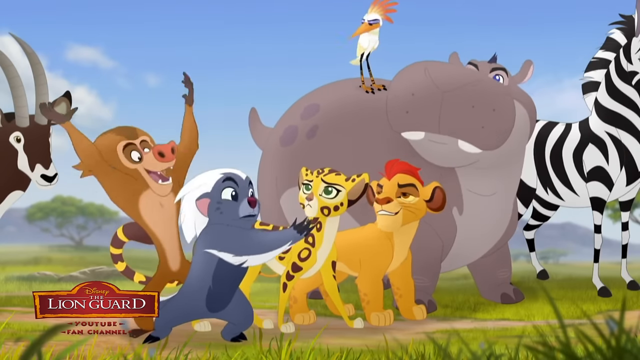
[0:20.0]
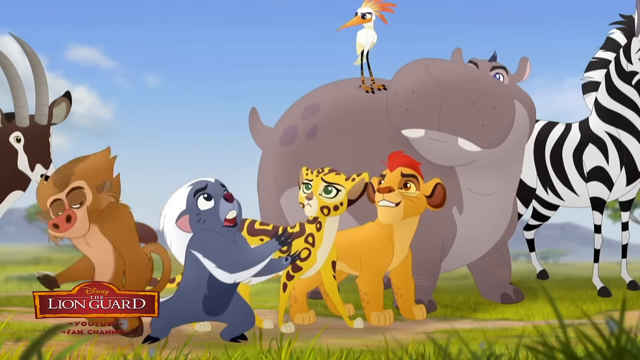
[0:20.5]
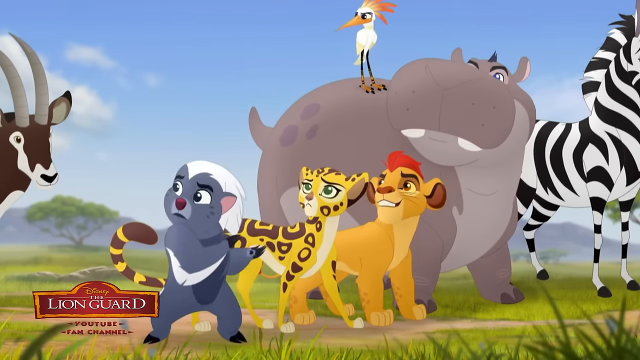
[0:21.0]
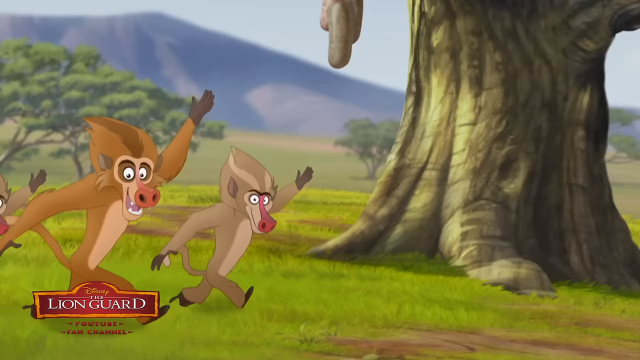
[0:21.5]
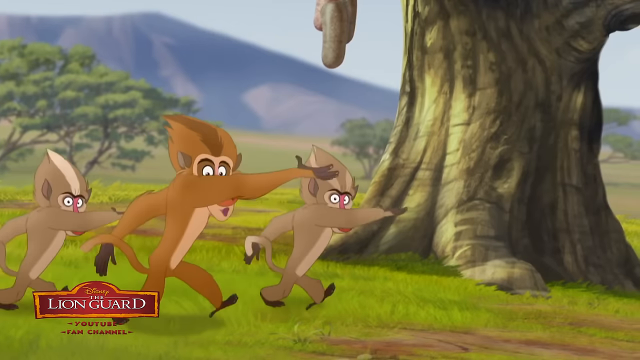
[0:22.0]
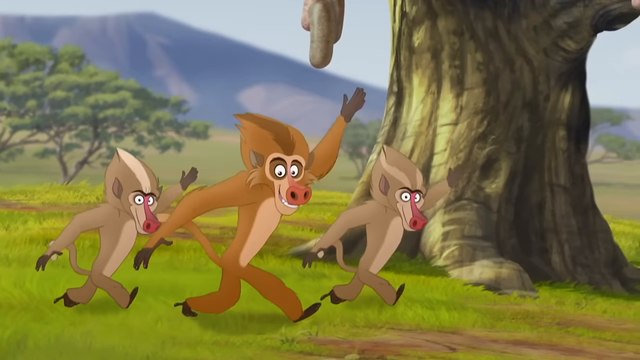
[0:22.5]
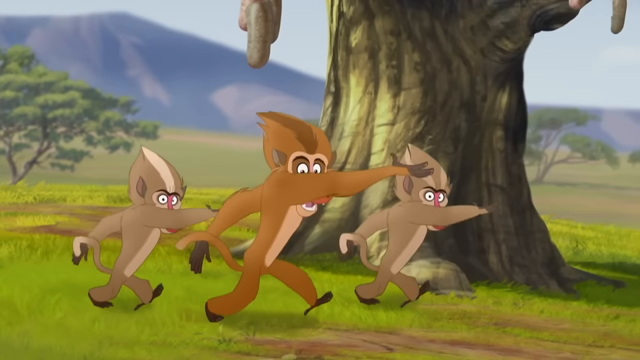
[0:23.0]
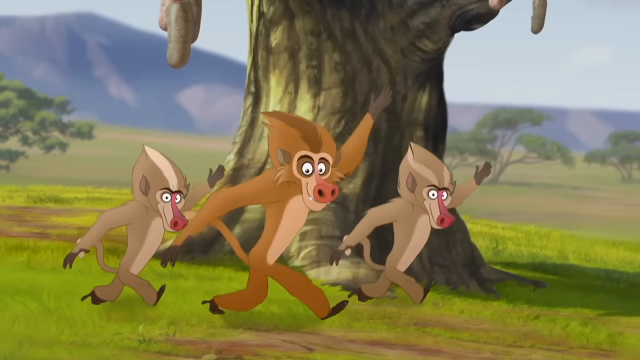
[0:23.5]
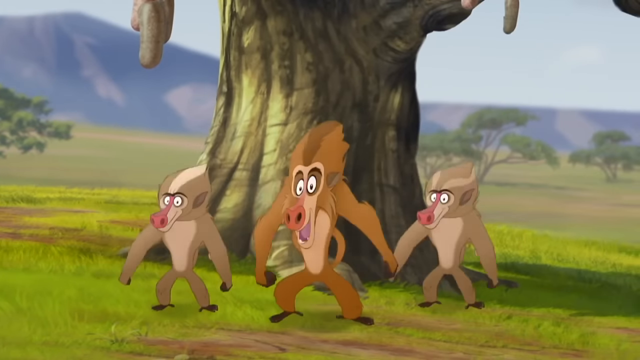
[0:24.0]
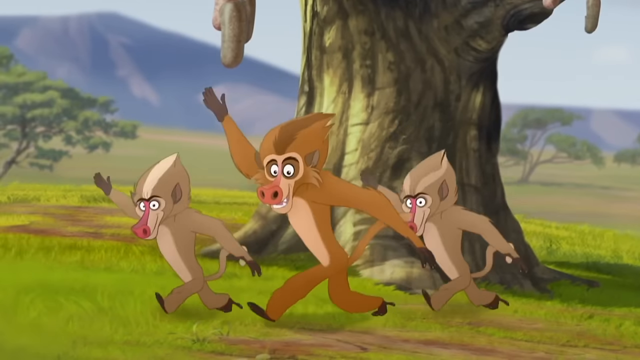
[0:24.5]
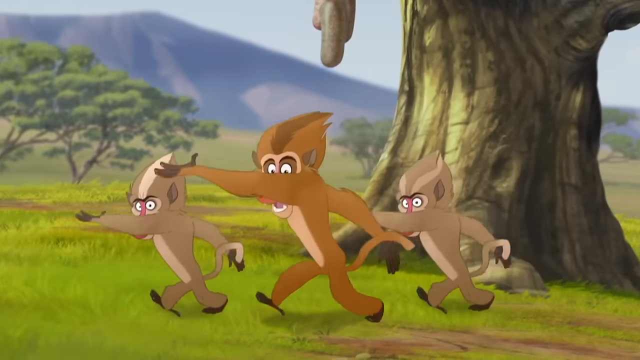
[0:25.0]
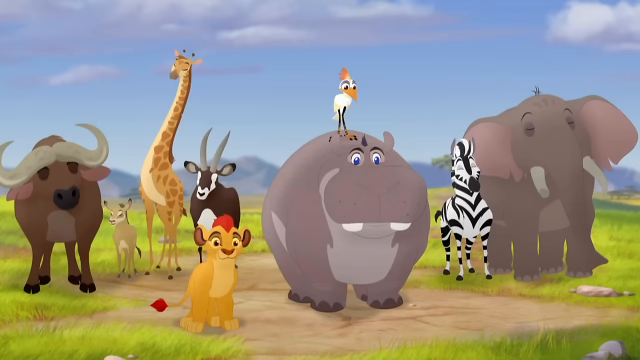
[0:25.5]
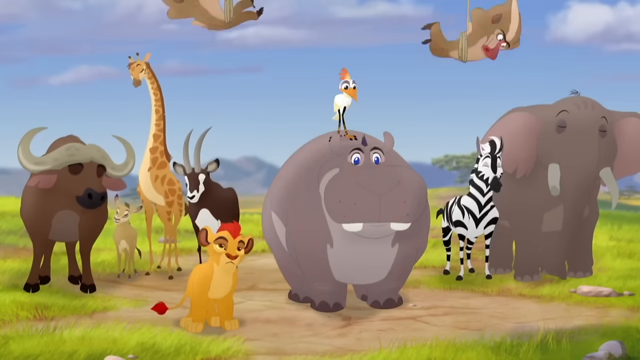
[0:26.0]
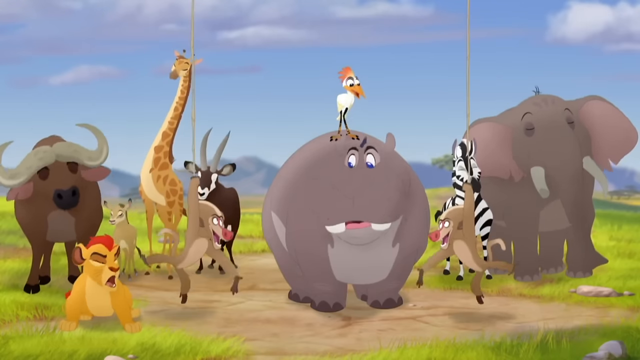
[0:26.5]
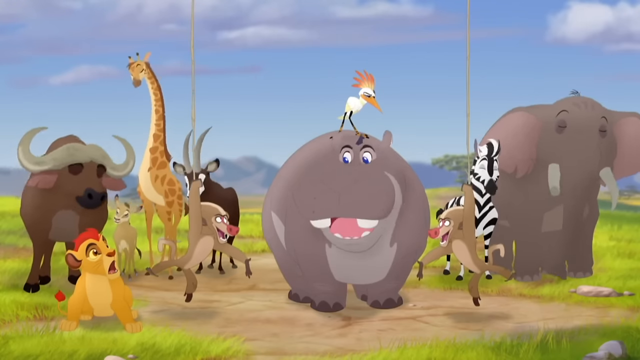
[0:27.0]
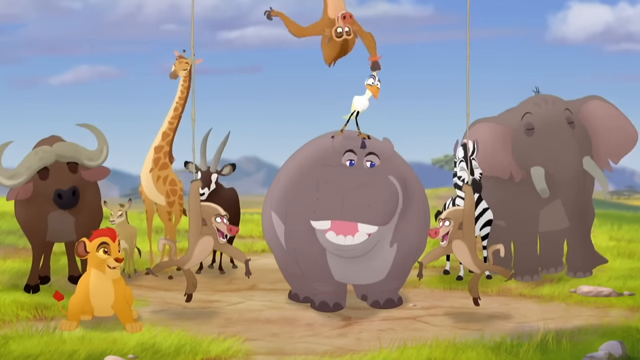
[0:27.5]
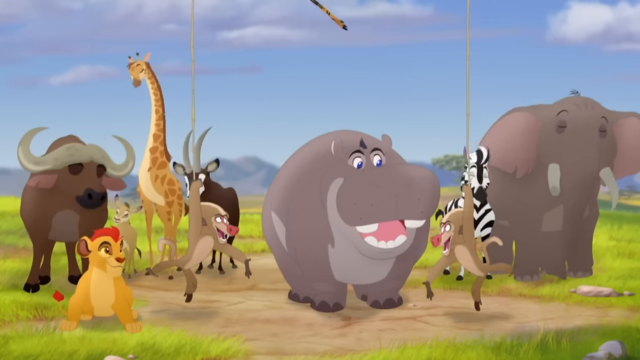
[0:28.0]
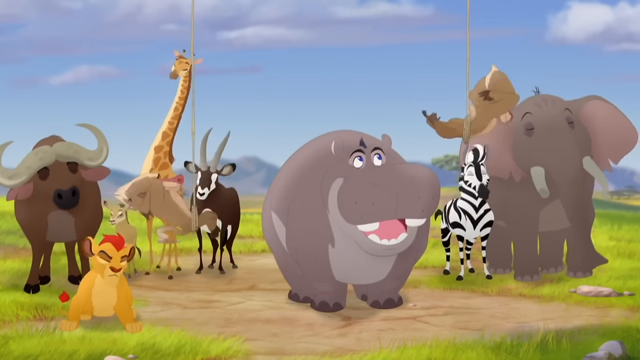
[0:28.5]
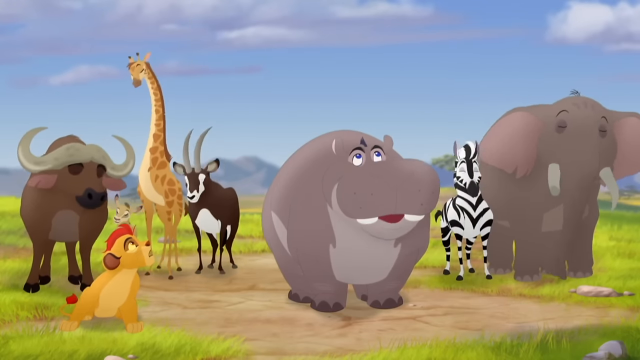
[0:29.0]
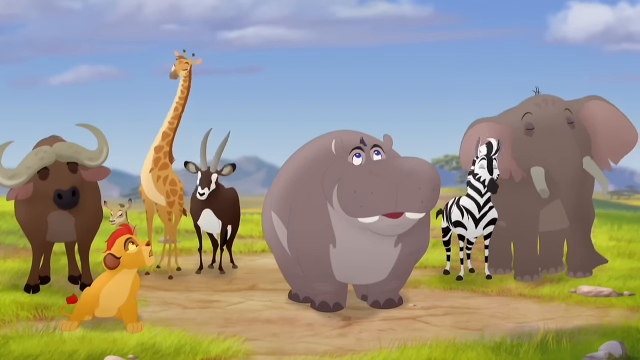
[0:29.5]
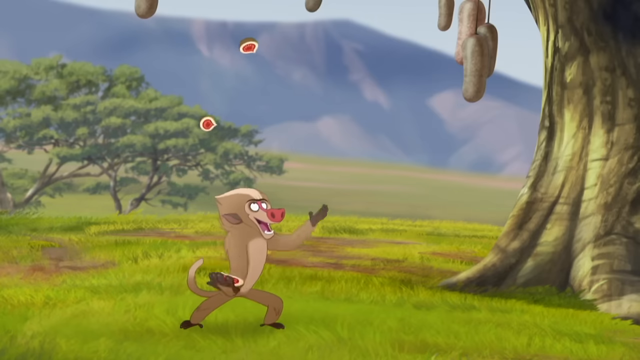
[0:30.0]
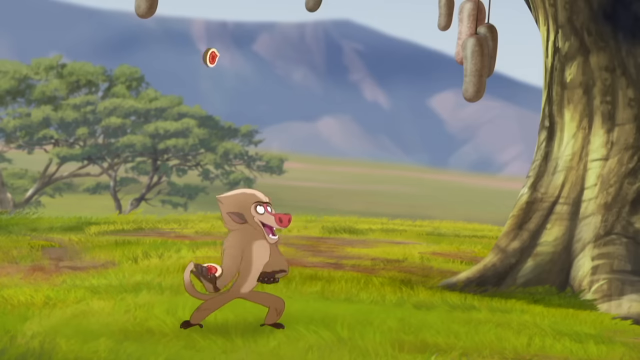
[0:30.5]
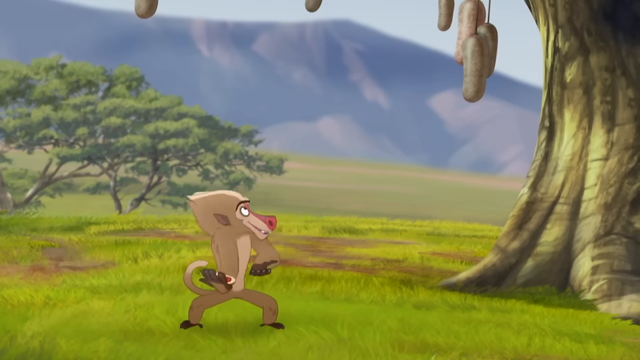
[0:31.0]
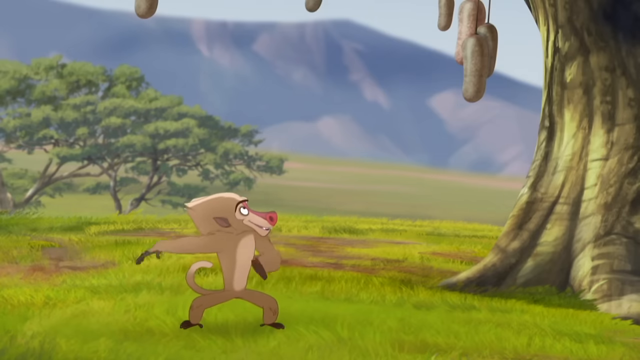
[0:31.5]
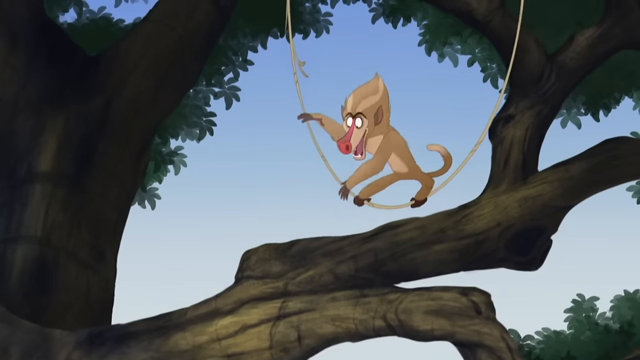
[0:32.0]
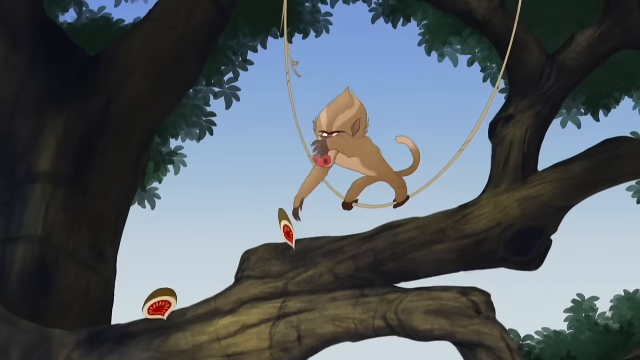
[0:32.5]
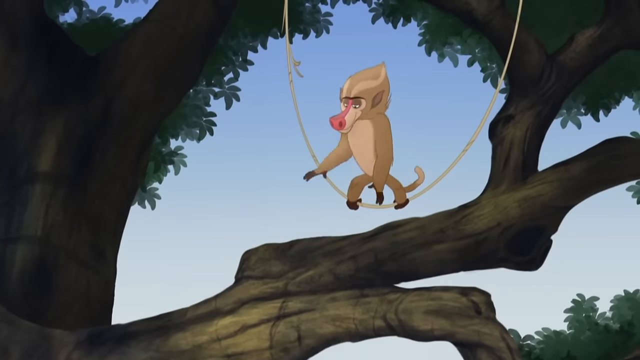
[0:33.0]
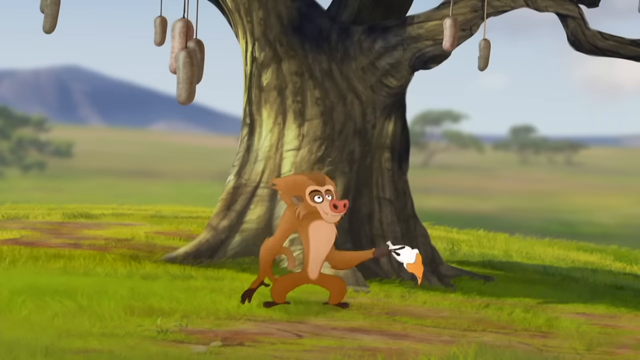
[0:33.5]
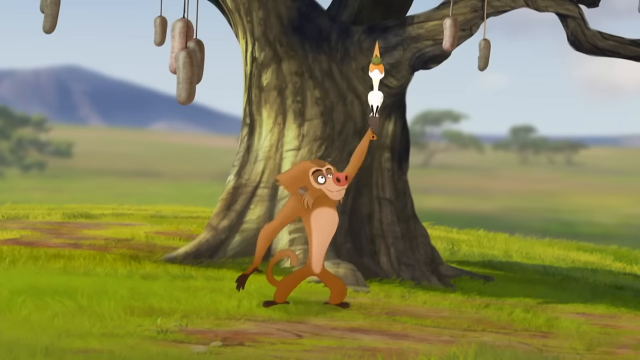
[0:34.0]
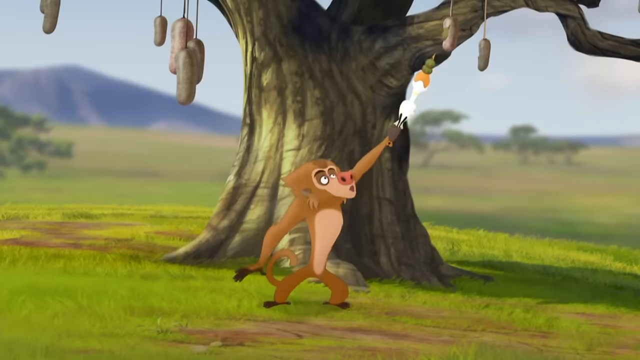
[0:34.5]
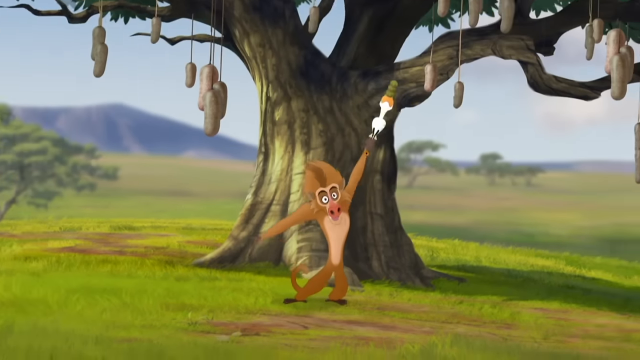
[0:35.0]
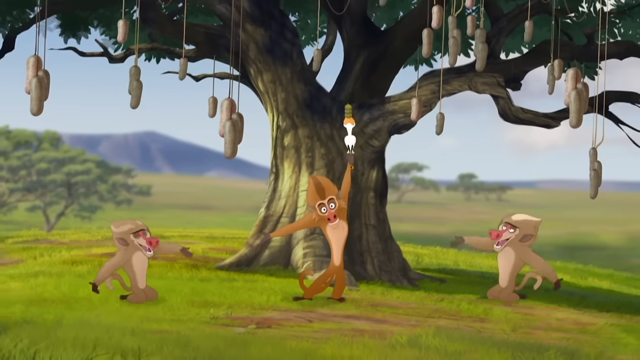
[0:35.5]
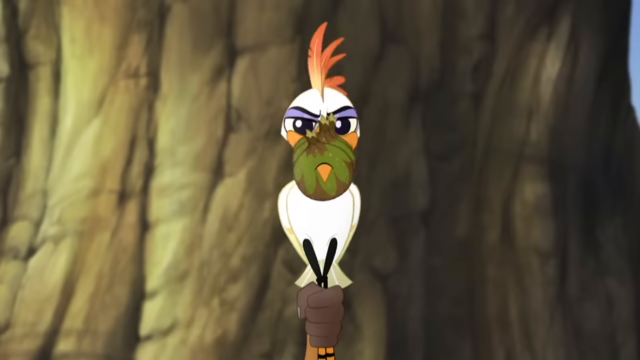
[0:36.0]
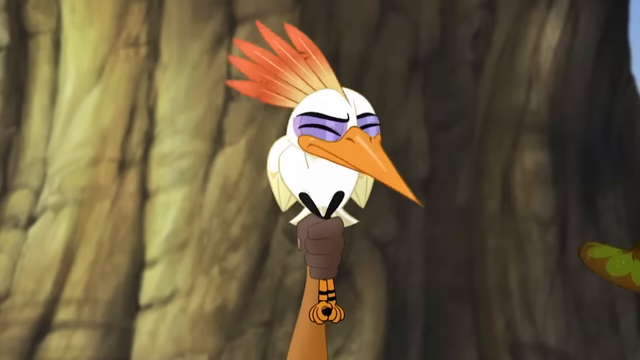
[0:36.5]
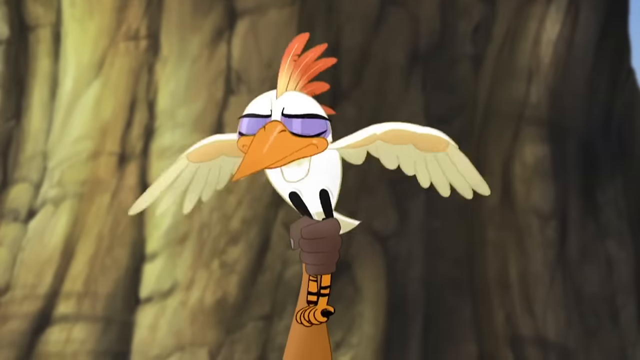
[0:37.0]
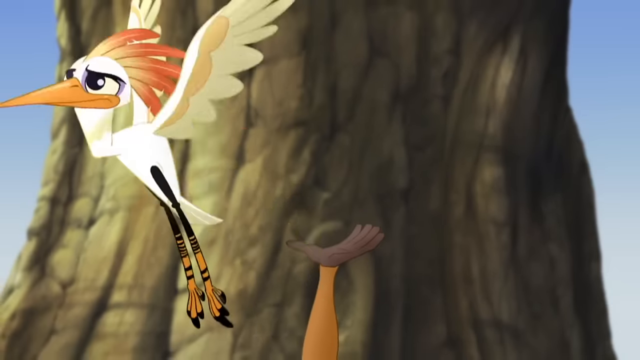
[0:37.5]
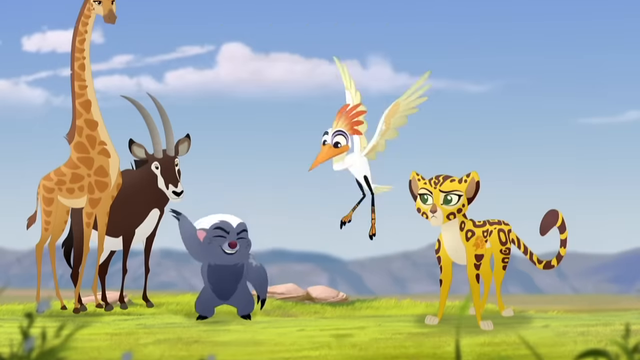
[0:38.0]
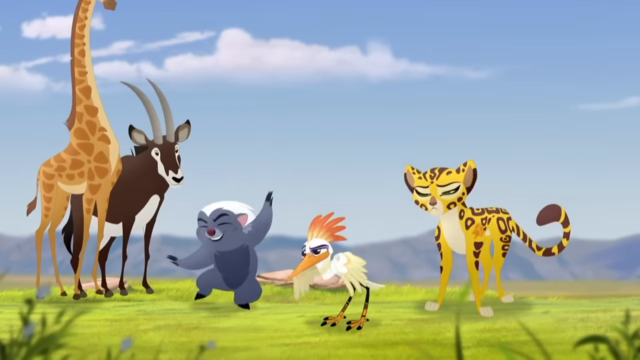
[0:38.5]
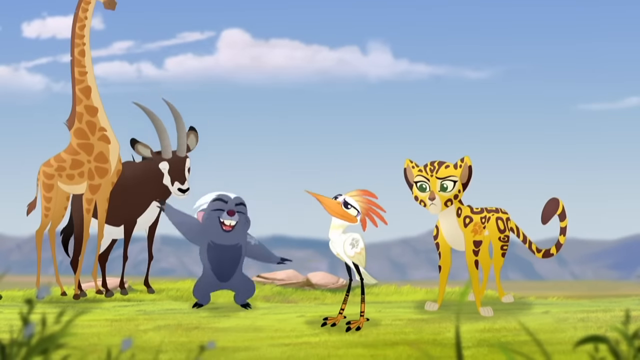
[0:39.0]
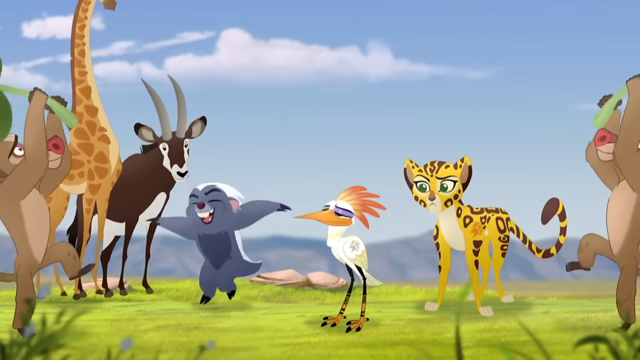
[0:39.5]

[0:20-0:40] The baboons dance together, mimicking each other's movements, and the one with darker brown fur is talking. The scene cuts back to the group of animals, where the other two baboons slingshot down on vines and kidnap the bird that was sitting on the hippopotamus's back. Back at the tree, the baboons juggle what looks like some kind of fruit; one passes it to the other, who knocks it down, and the darker brown baboon takes the bird and uses its beak to skewer the three pieces of fruit, like a cook with a skewer. In a close-up, the bird shakes its head, flings off the fruit and flies away. Back with the animals, the two lighter baboons show up with big comical palm tree branches and use them to cover the bird, as if censoring something inappropriate.